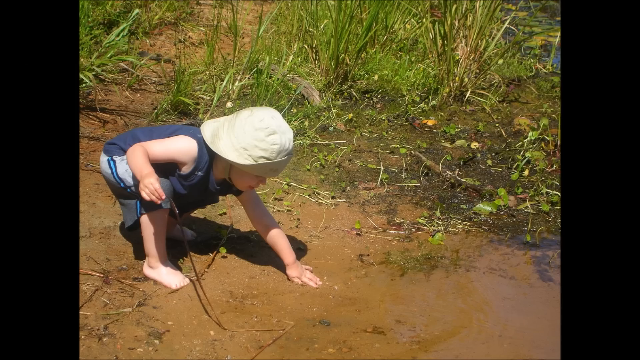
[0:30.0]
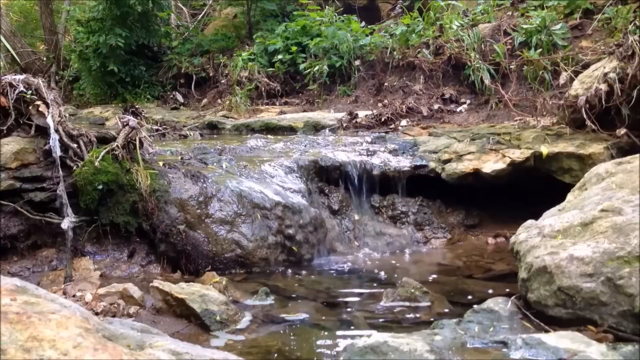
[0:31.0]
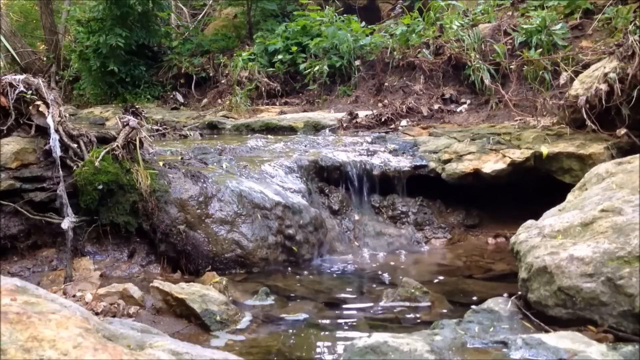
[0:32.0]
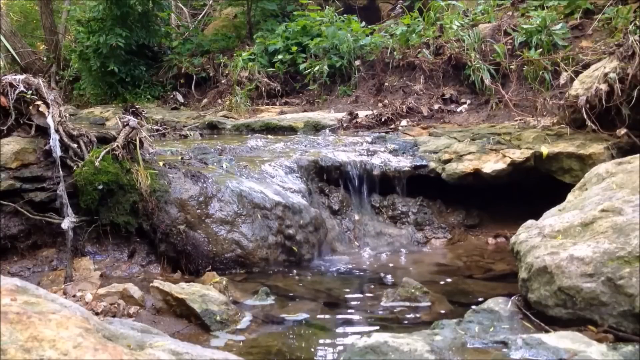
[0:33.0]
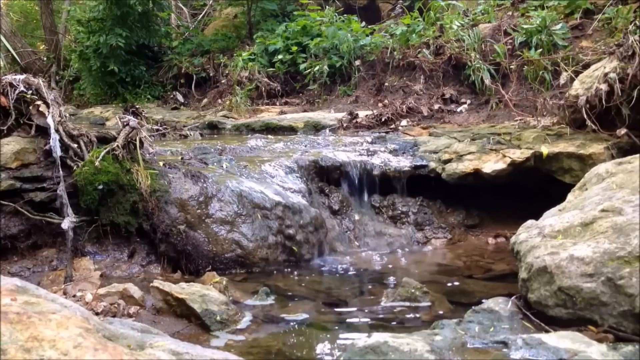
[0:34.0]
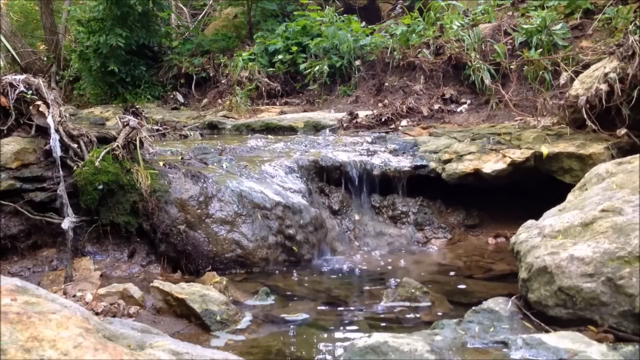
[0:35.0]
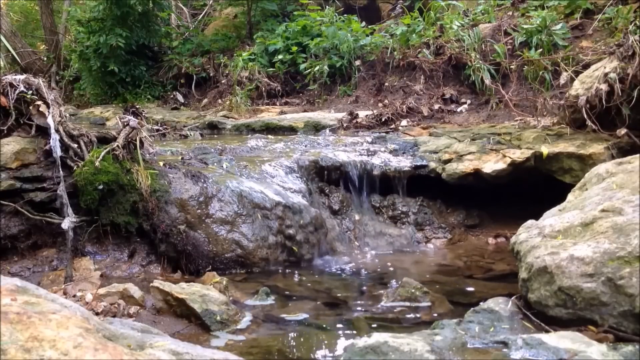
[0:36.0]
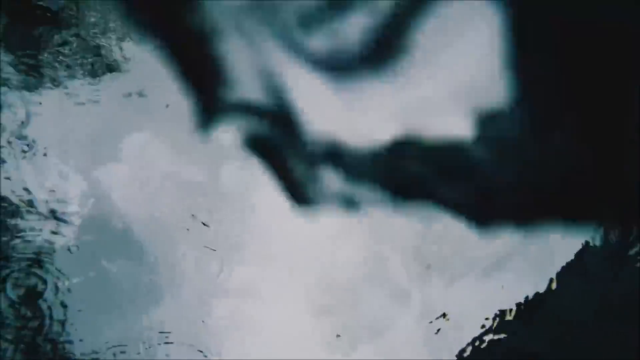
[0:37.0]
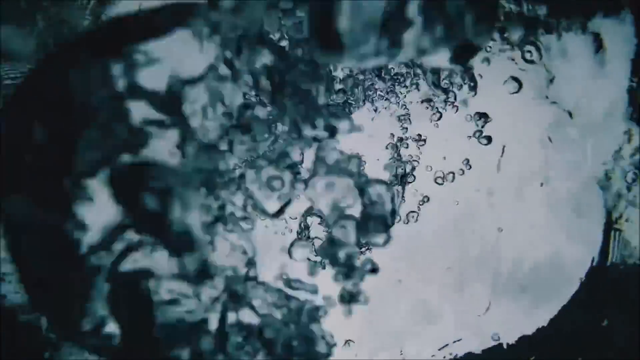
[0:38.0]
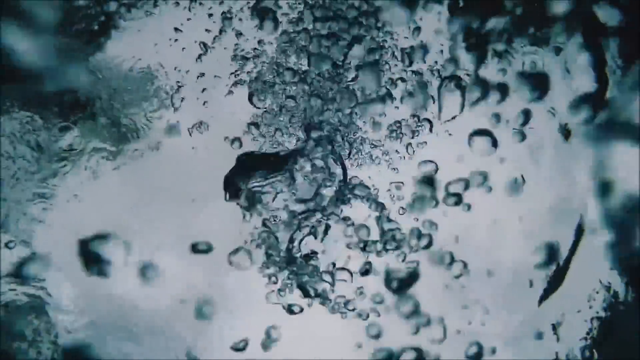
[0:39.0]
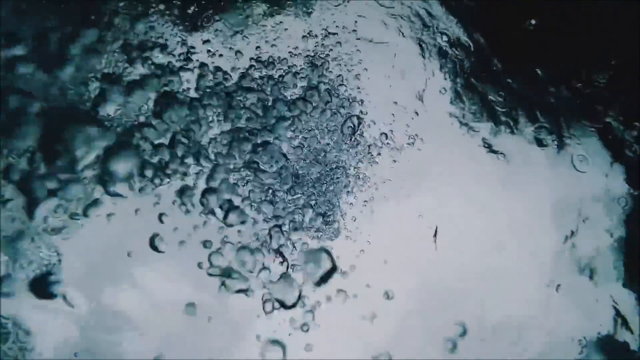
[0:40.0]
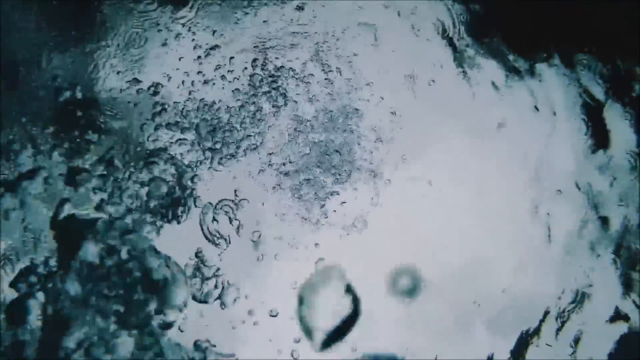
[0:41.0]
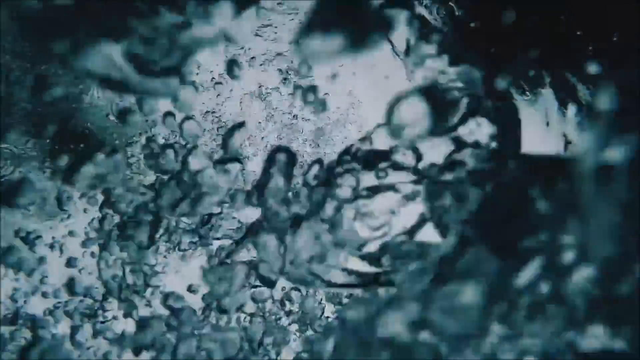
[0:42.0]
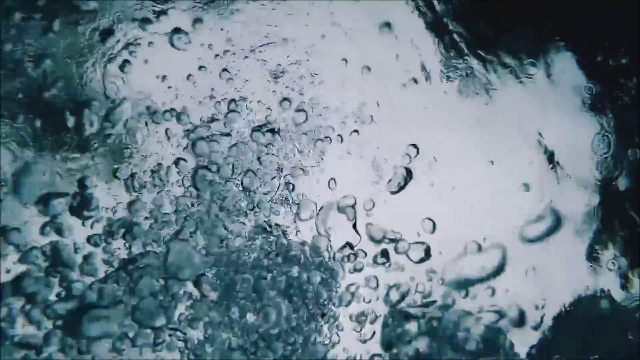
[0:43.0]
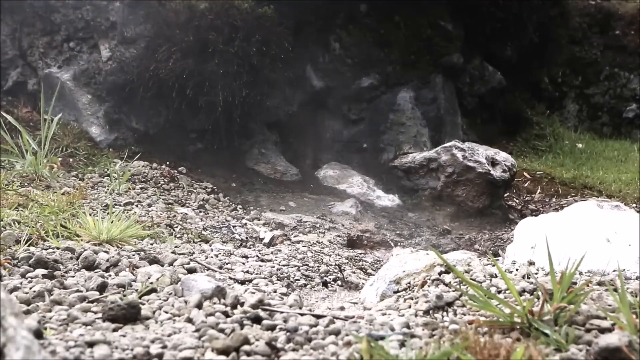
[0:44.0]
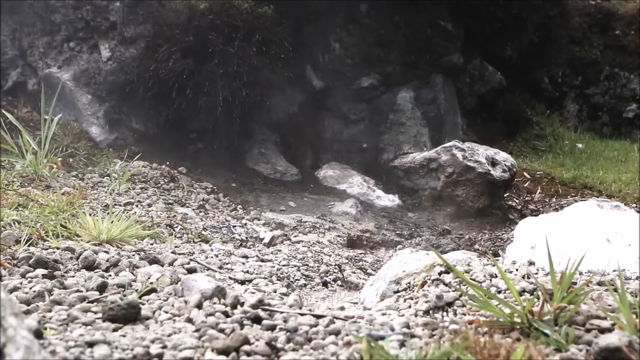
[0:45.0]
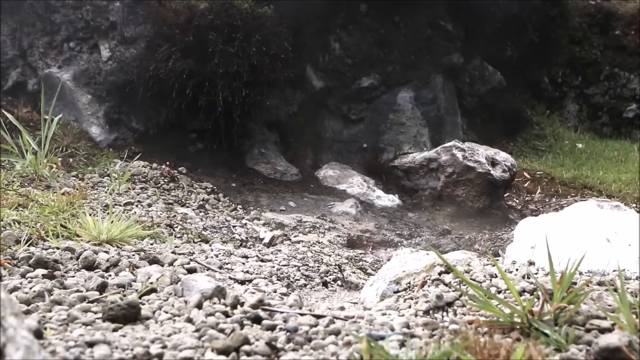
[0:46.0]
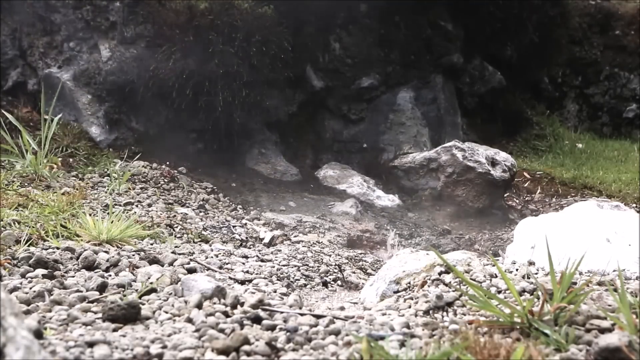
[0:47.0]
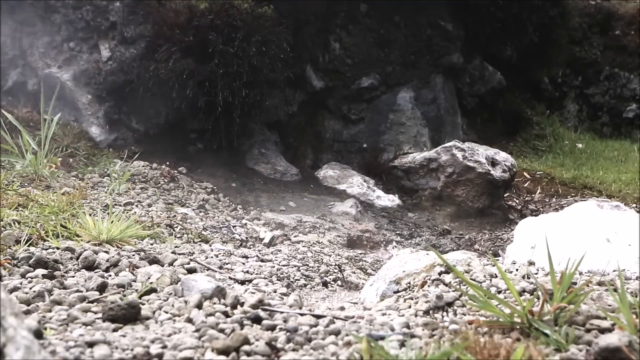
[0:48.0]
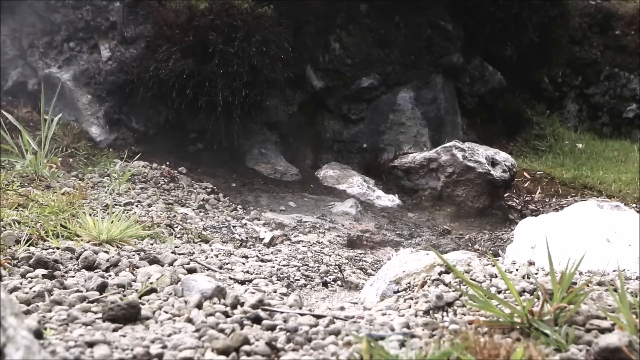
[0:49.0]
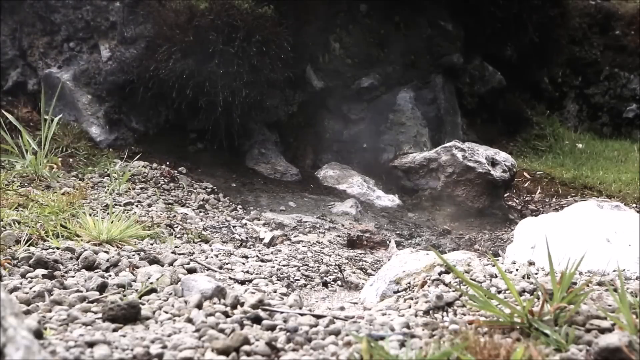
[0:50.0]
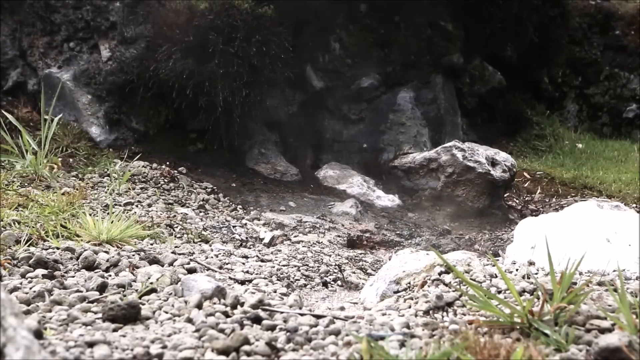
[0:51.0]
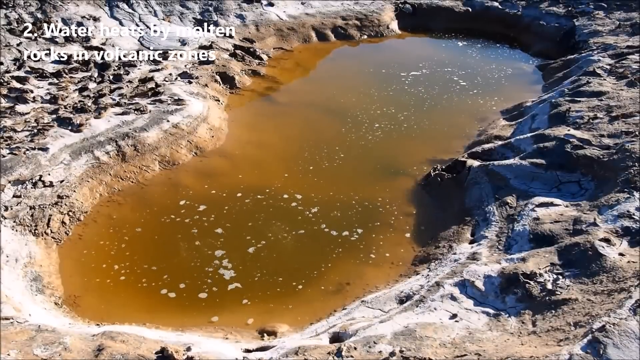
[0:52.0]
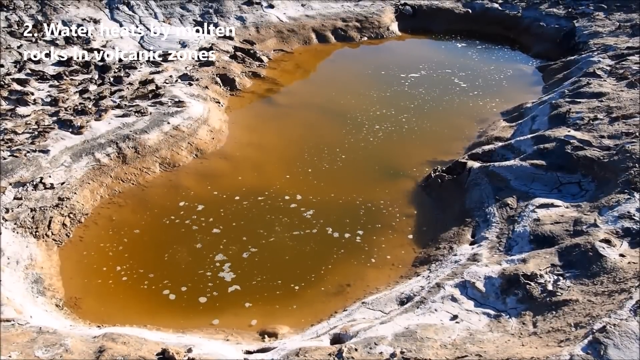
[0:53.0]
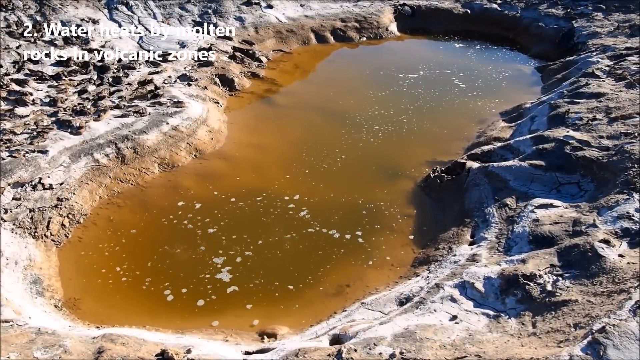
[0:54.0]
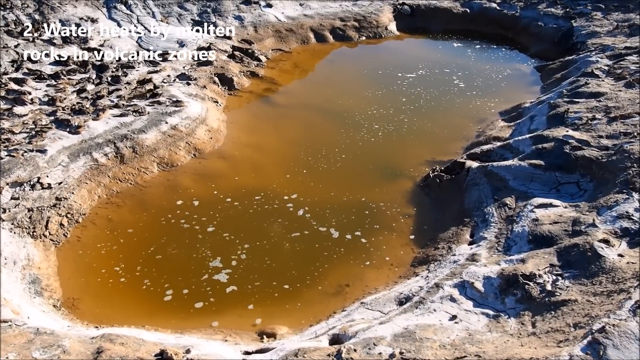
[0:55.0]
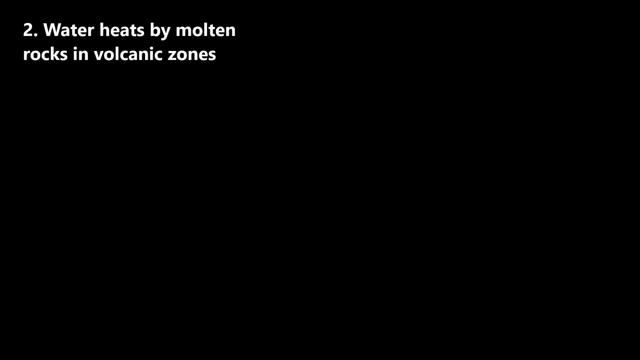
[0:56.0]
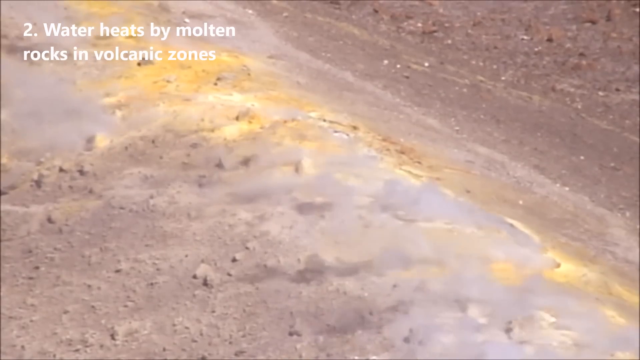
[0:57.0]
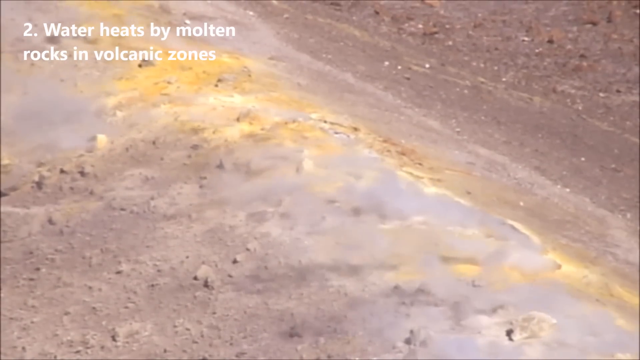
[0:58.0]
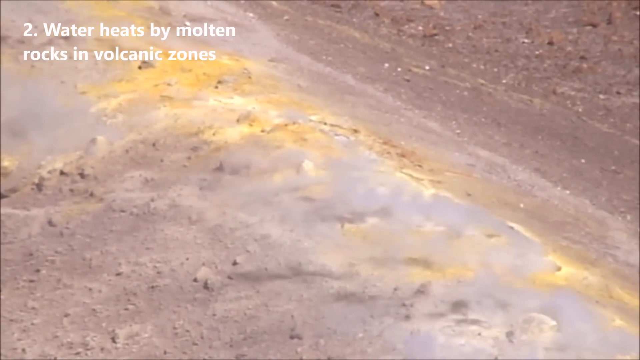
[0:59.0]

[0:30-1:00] The picture of the little kid touching the mud, with grass in the background, is shown. It quickly cuts to footage of a rocky place where water falls from some rocks in a small fall into a place below where the water gathers; there also seems to be some sort of cave in the rocks. Next, water is seen from below as bubbles come up, seemingly heating. The video cuts back to the earlier place where the water evaporates and vapor is in the air. The screen then changes to a place with an opening containing some yellow water, and the on-screen text reads "2. water heats by molten rocks in volcanic zones."